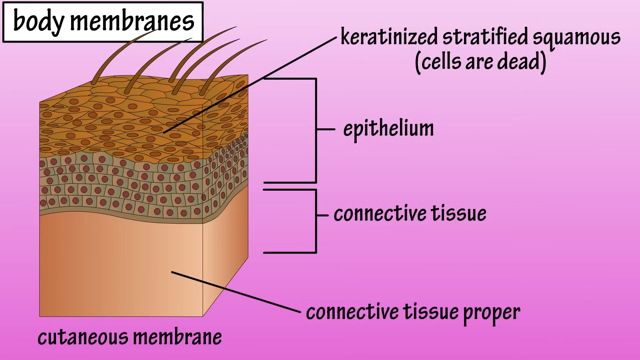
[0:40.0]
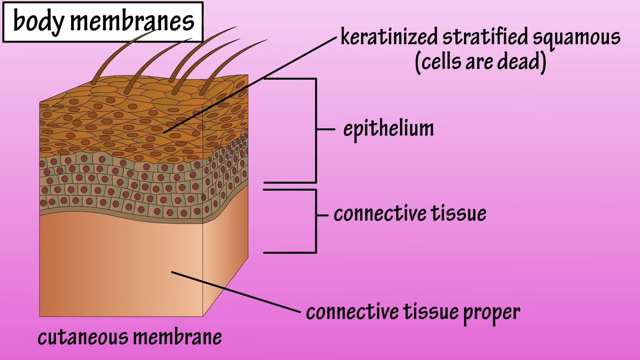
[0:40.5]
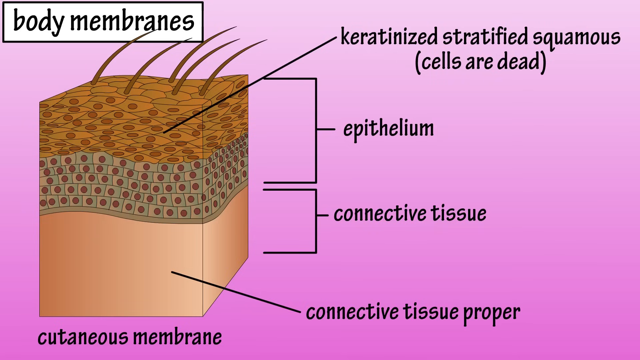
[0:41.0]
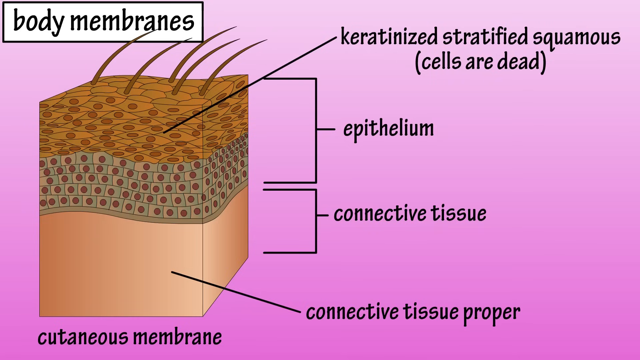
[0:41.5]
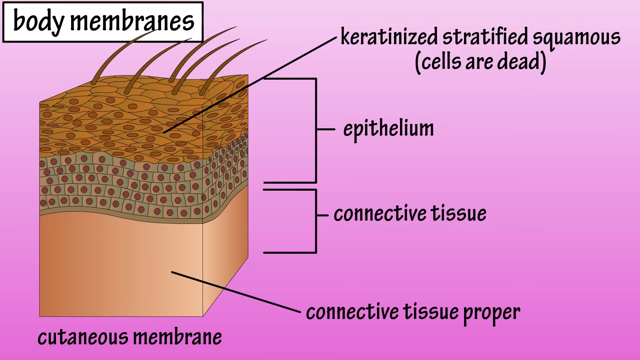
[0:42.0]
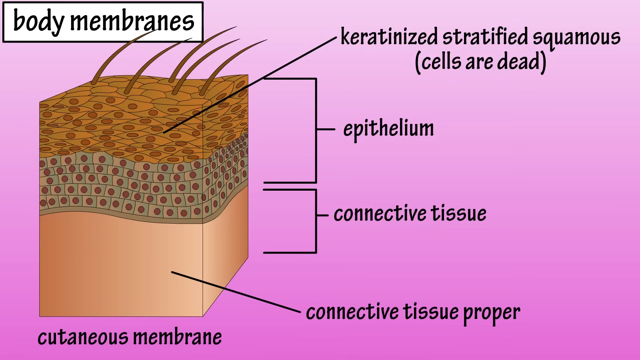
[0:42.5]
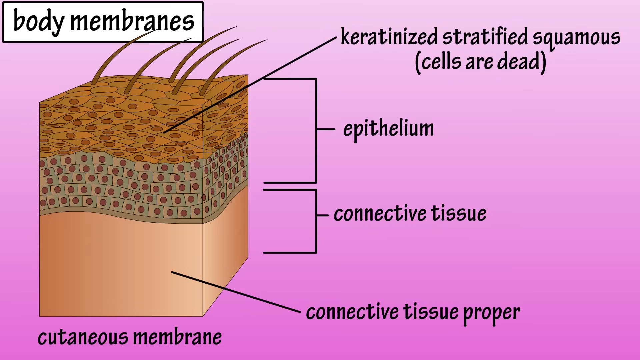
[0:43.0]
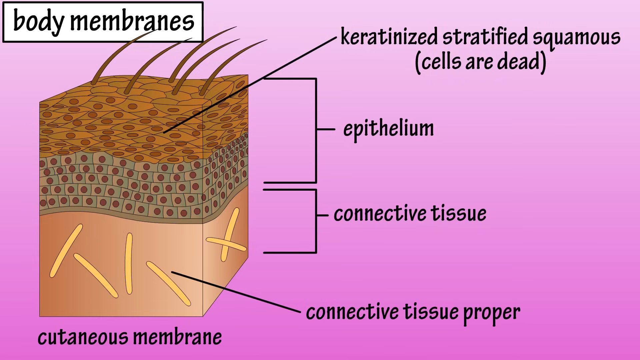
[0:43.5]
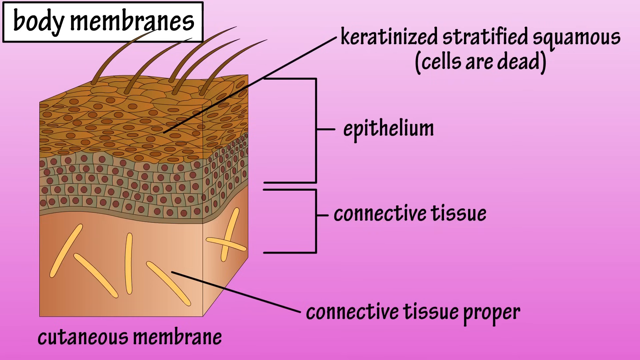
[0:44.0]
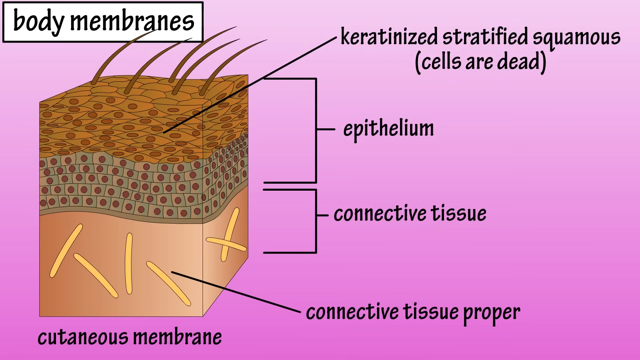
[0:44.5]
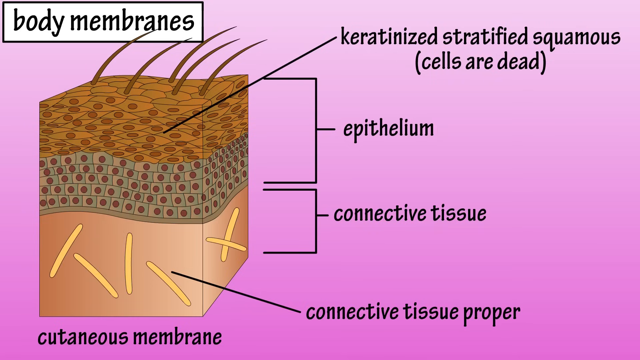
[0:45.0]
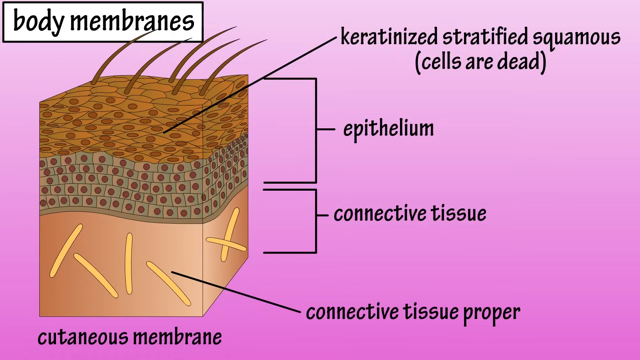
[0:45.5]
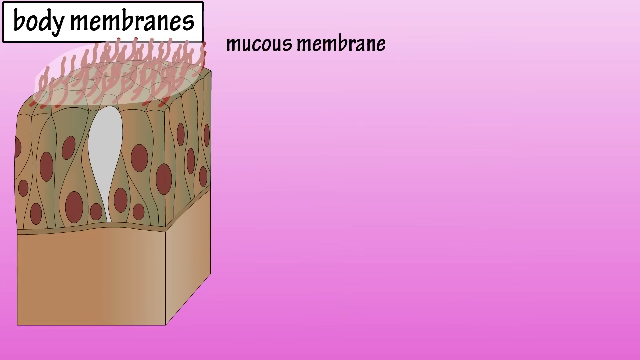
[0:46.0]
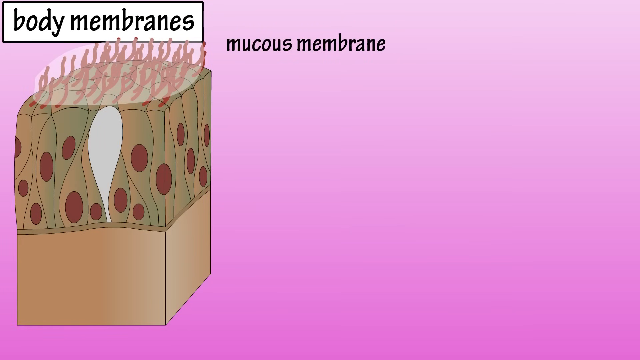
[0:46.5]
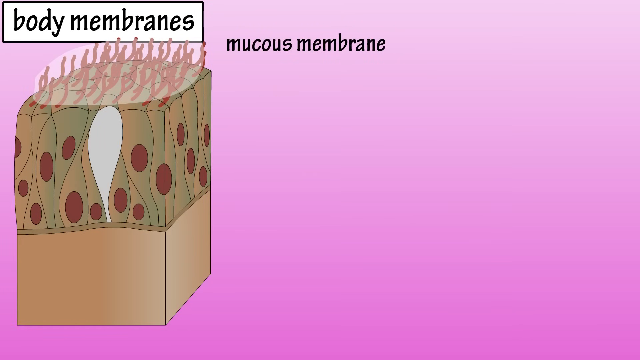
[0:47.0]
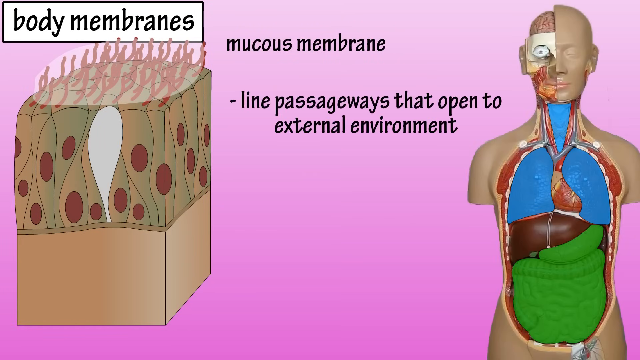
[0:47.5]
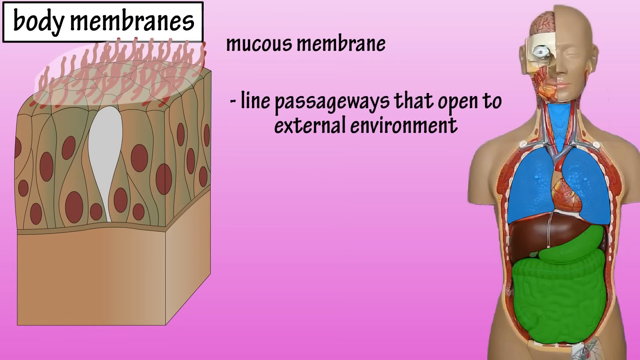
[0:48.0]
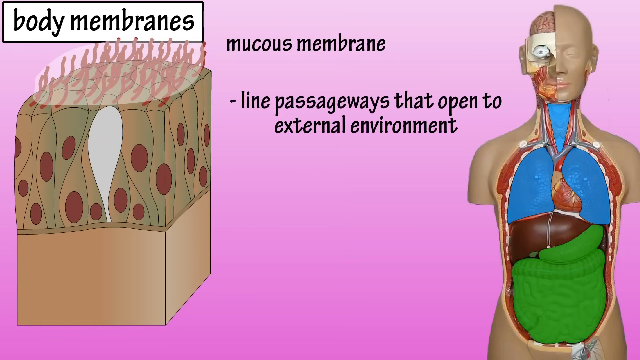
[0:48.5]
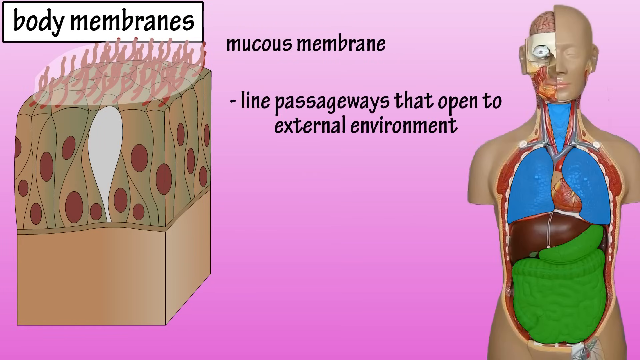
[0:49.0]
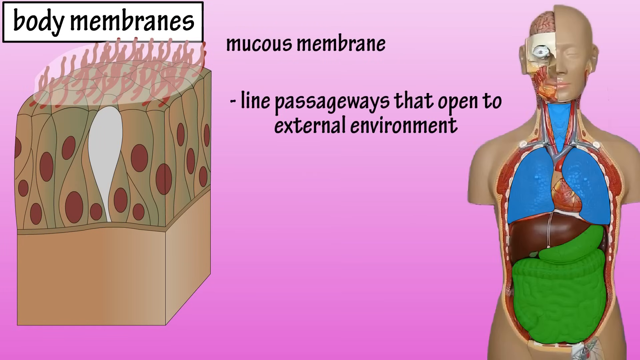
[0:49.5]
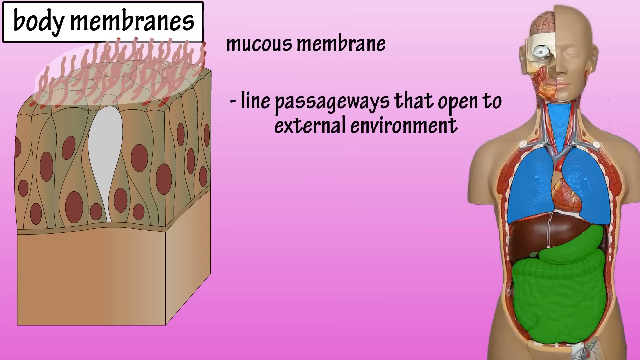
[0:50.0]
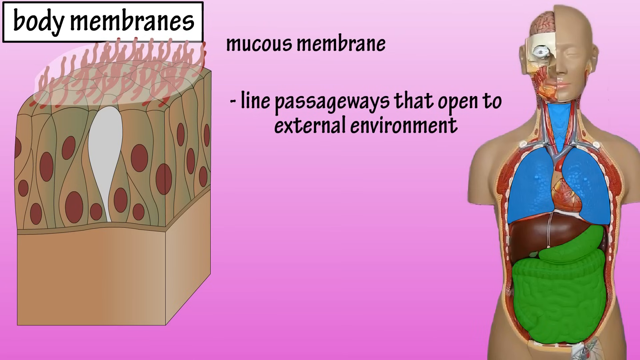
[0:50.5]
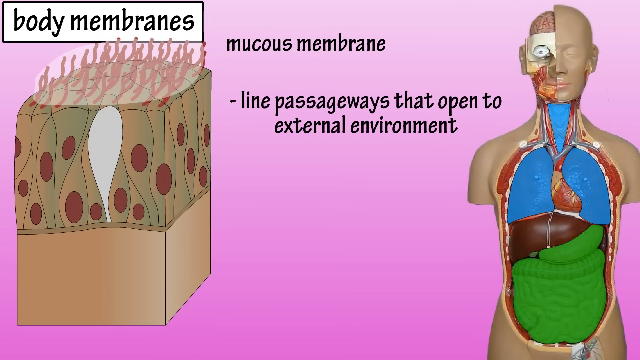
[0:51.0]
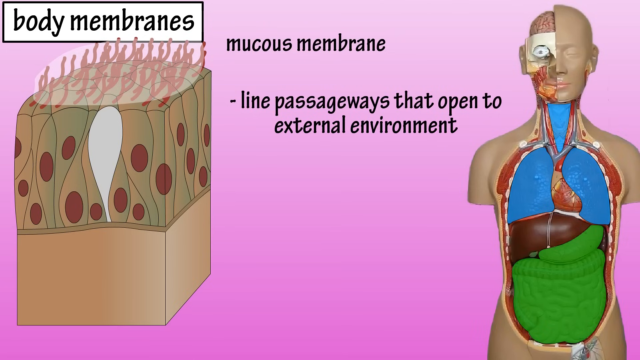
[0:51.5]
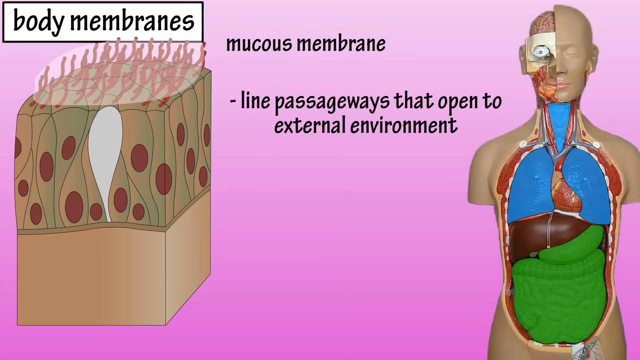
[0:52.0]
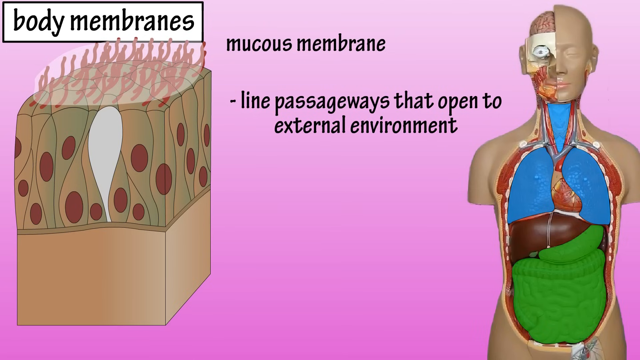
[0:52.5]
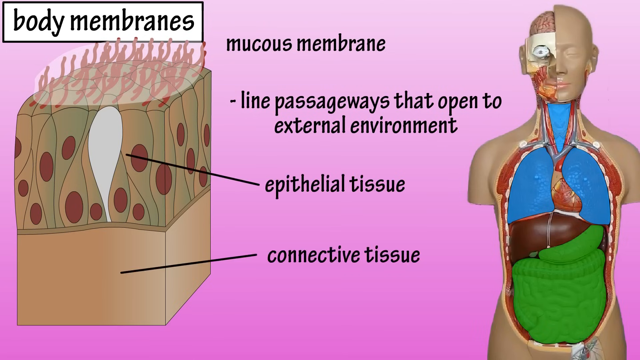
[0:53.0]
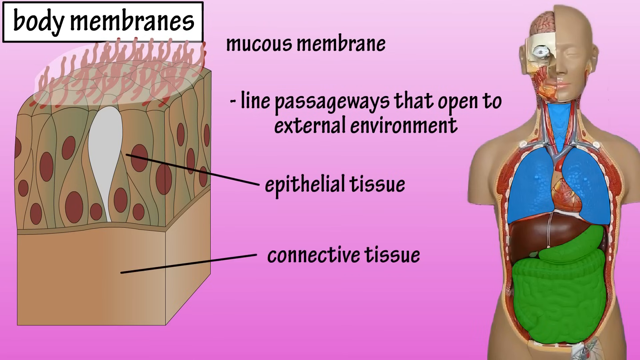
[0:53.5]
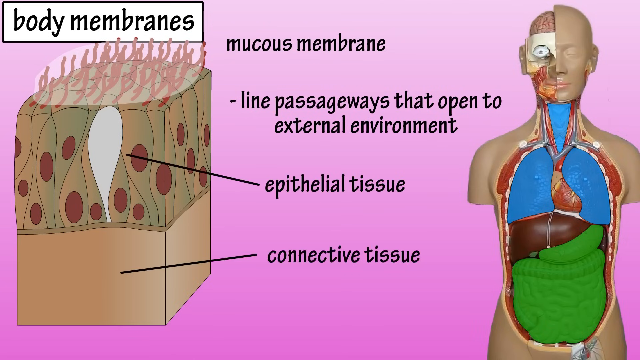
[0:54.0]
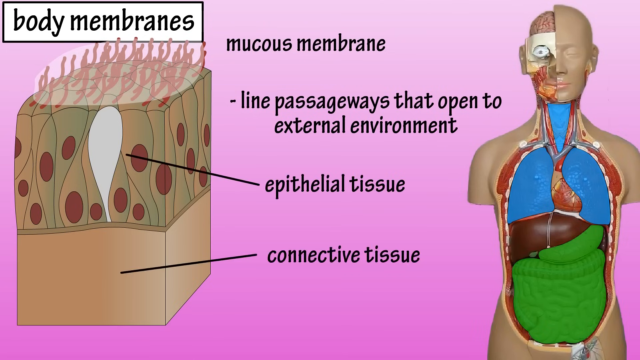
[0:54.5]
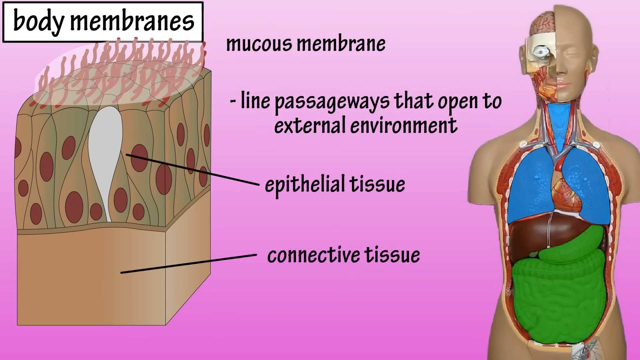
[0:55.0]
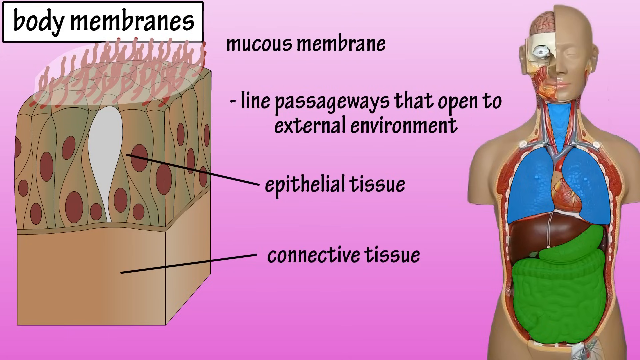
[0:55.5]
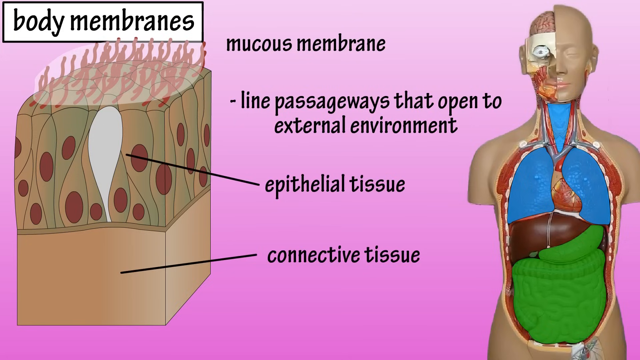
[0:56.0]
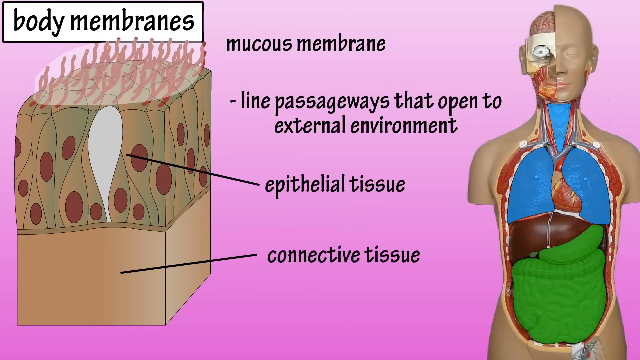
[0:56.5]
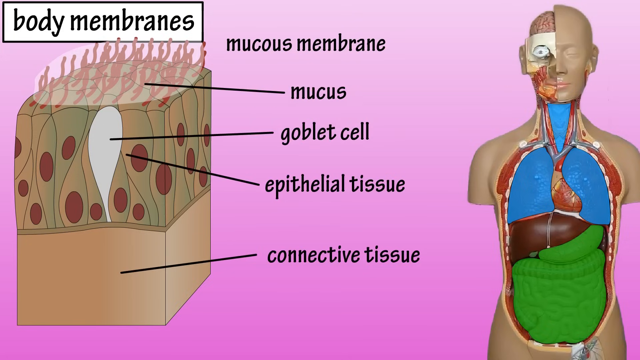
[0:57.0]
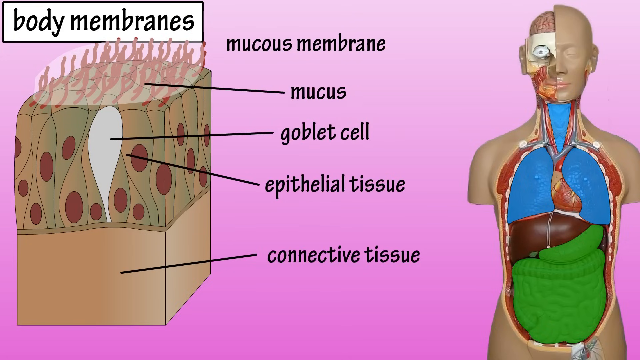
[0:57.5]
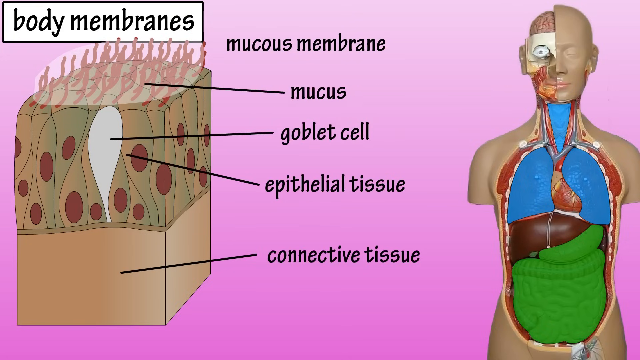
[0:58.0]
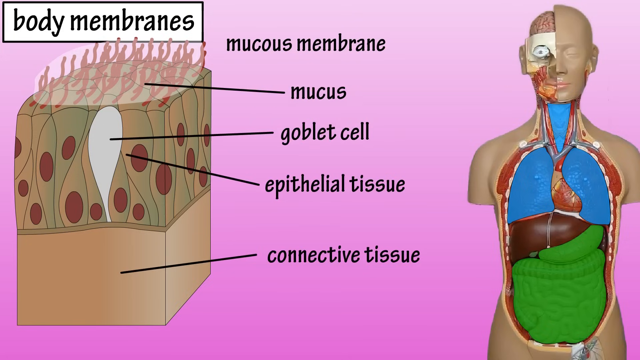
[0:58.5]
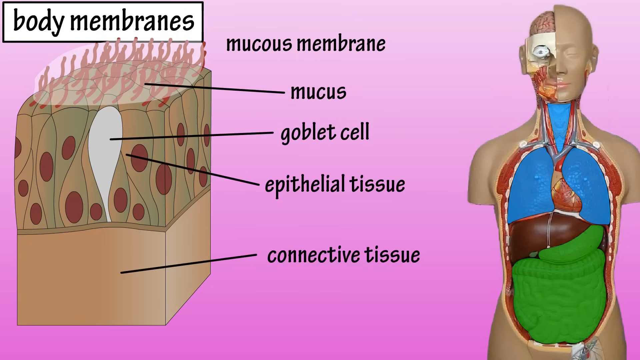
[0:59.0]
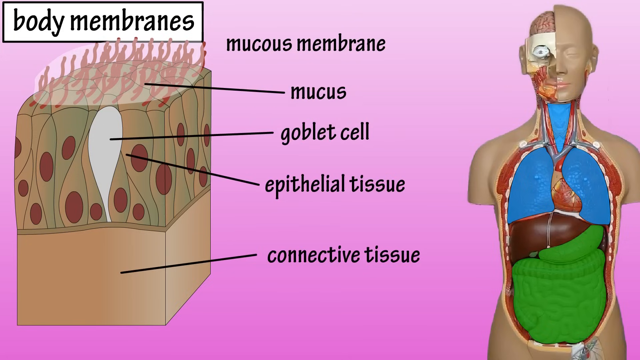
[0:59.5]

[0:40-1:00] Another label appears in black text near the bottom right corner of the screen, reading "connective tissue proper", with a line connecting it to the bottom of the connective tissue. Some sort of cylindrical shapes are then overlaid into the connective tissue area of the image on the left side of the screen. The video transitions to the mucous membrane image and its cross-section diagram. A life-sized anatomical body model is shown on the right, along with a bullet point reading "line passageways that open to external environment". Two labels on the left side, with lines connecting them to the top and bottom of the image, read "epithelial tissue" and "connective tissue". The bullet point then disappears and is replaced by two lines: "mucous" at the very top of the epithelial tissue, and "goblet cells" pointing to a white teardrop shape in the center of the mucous membrane cross-section.